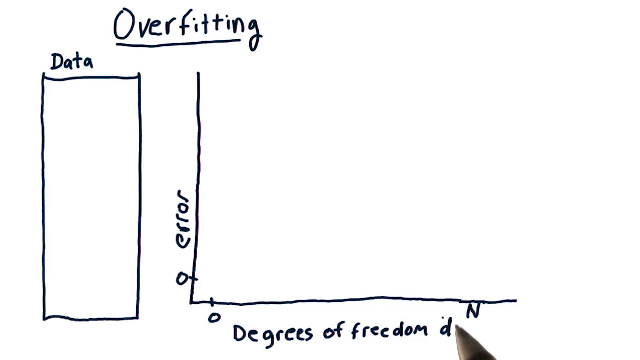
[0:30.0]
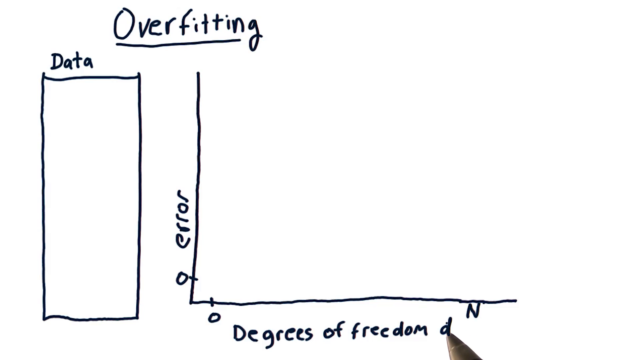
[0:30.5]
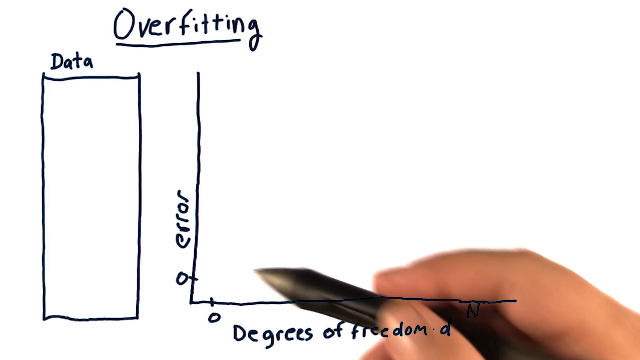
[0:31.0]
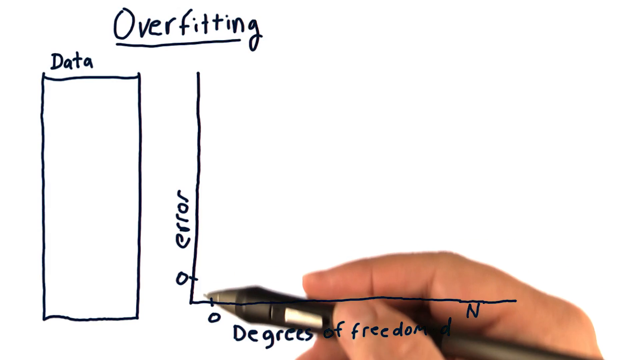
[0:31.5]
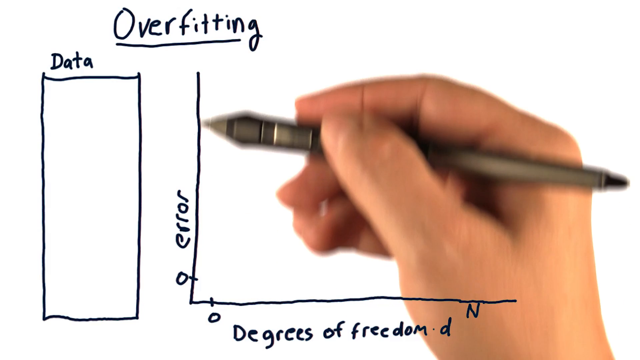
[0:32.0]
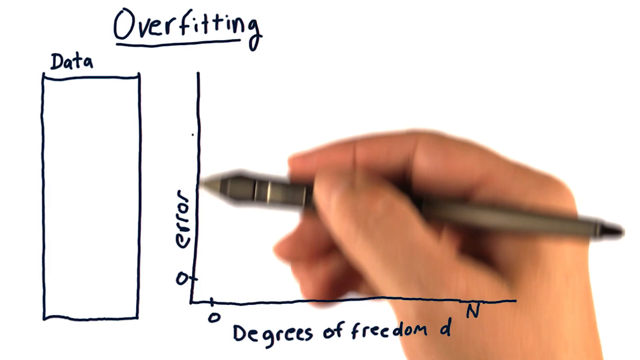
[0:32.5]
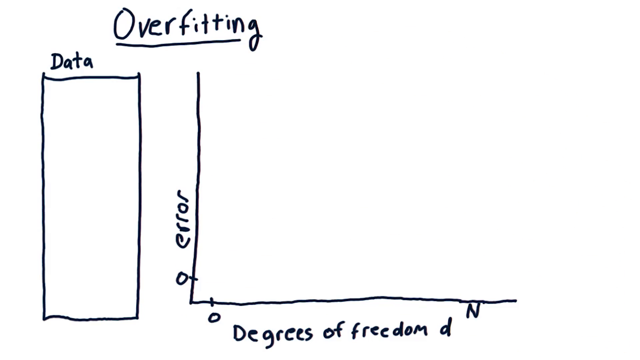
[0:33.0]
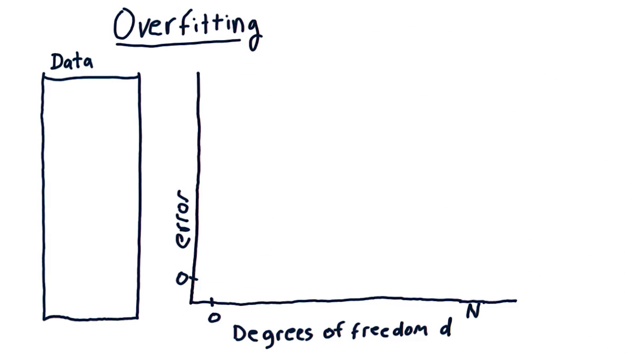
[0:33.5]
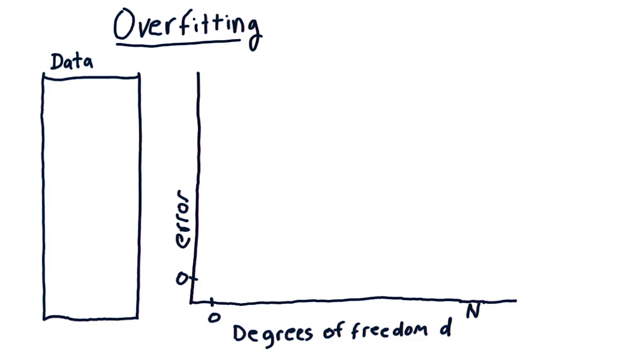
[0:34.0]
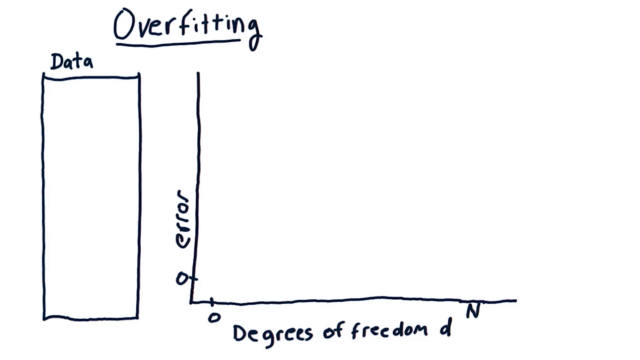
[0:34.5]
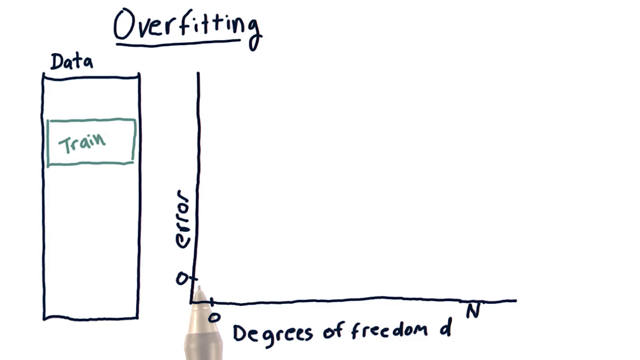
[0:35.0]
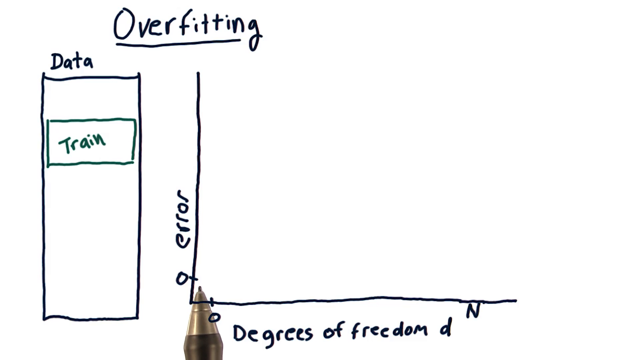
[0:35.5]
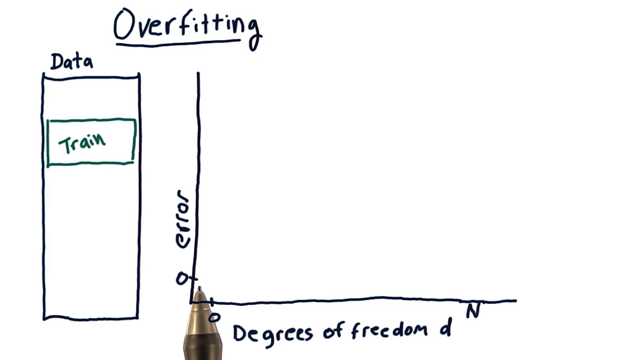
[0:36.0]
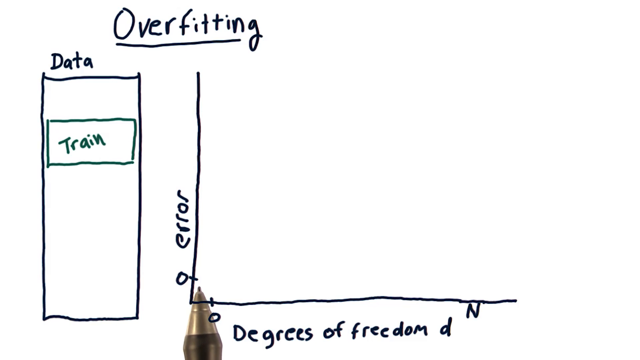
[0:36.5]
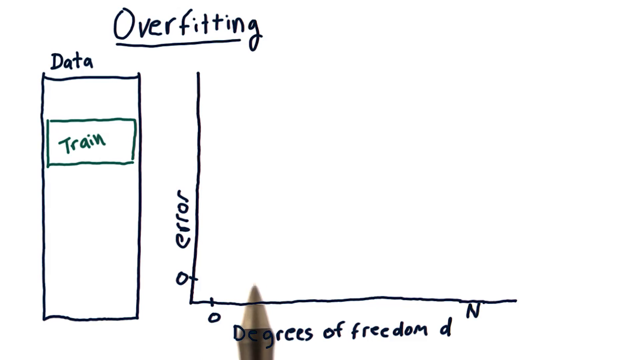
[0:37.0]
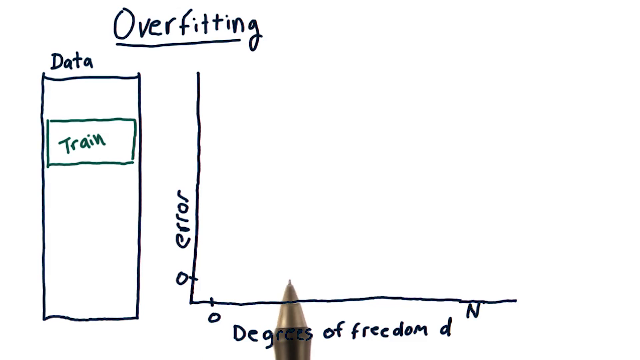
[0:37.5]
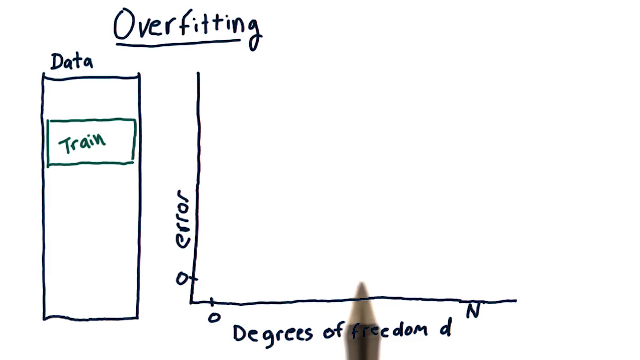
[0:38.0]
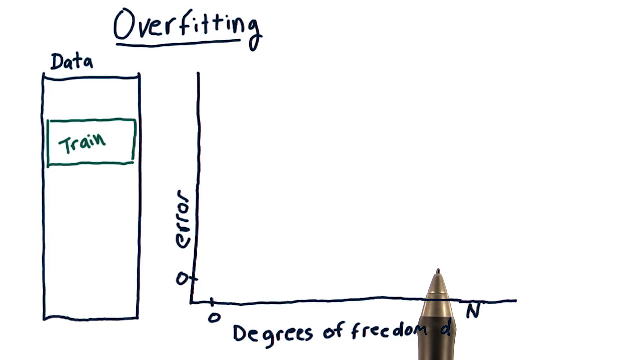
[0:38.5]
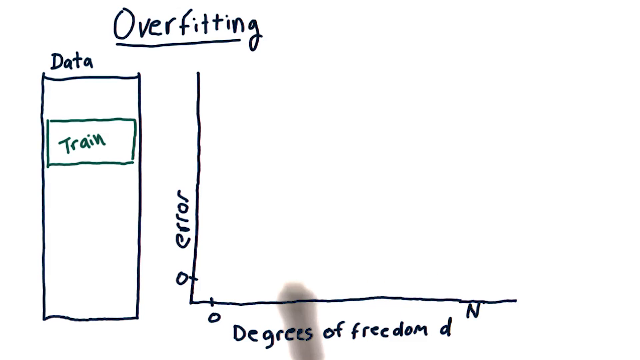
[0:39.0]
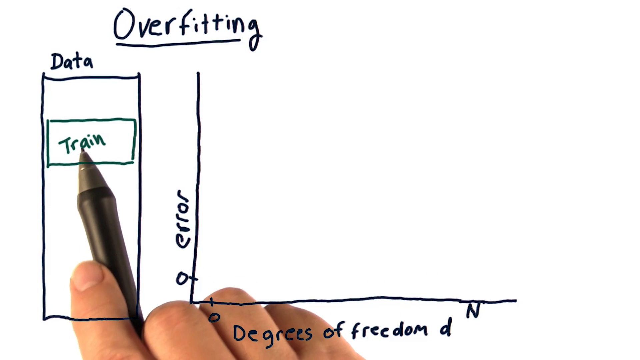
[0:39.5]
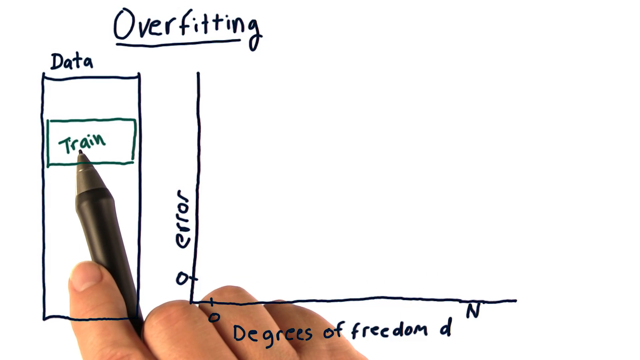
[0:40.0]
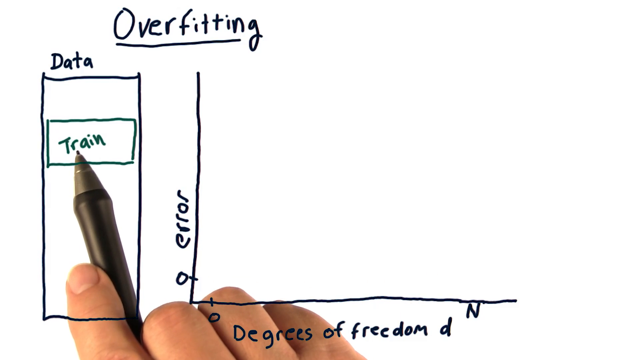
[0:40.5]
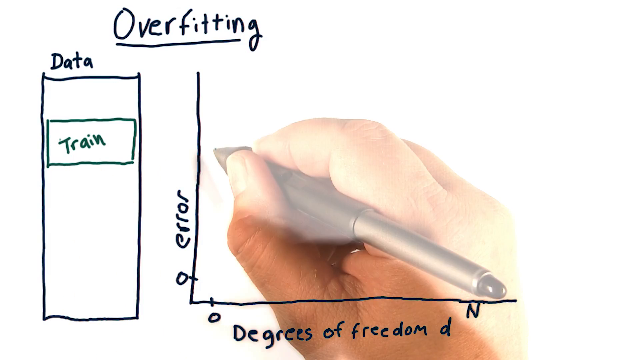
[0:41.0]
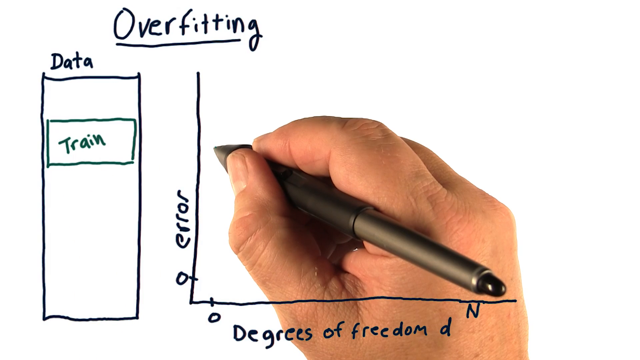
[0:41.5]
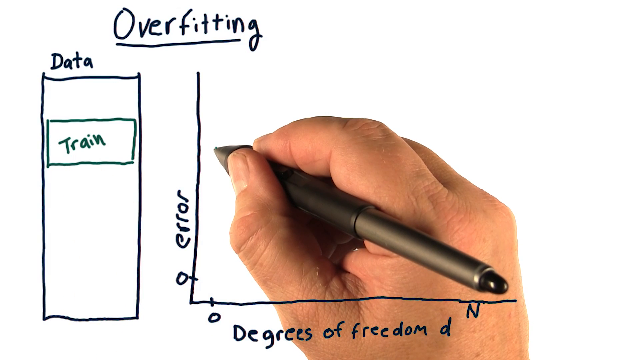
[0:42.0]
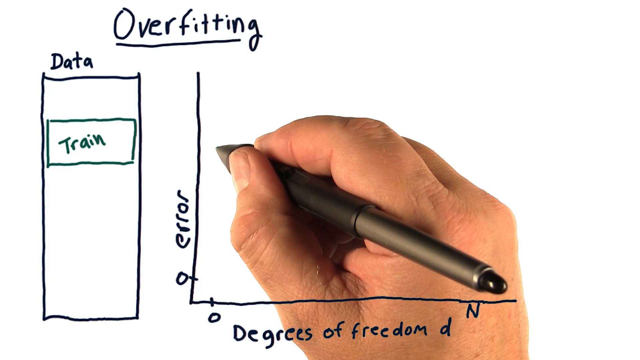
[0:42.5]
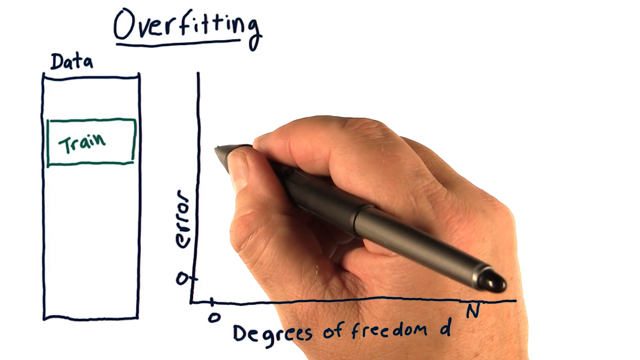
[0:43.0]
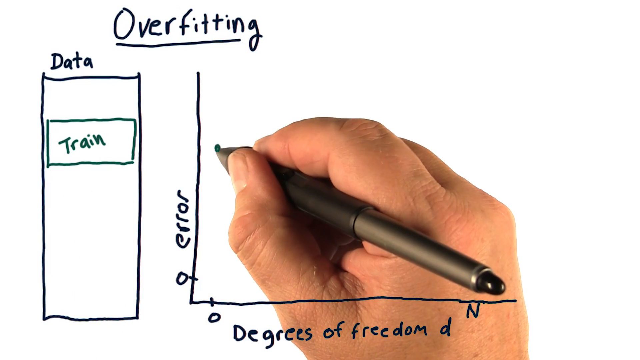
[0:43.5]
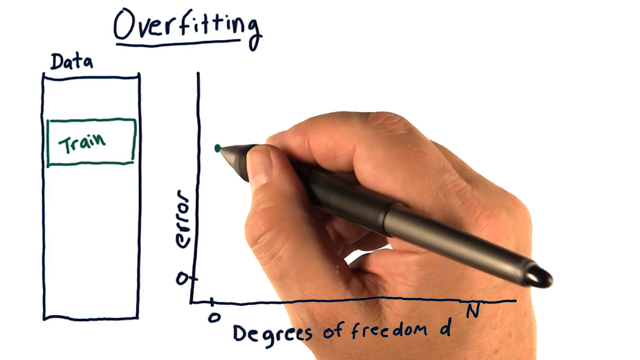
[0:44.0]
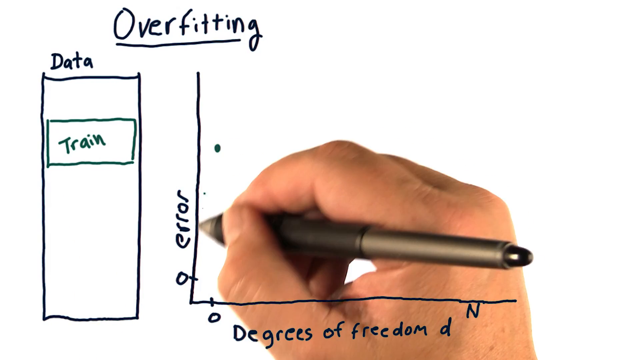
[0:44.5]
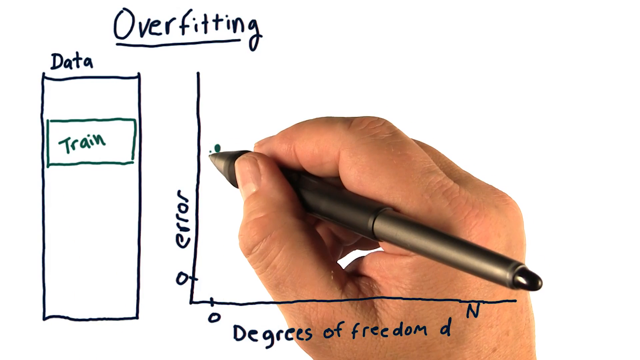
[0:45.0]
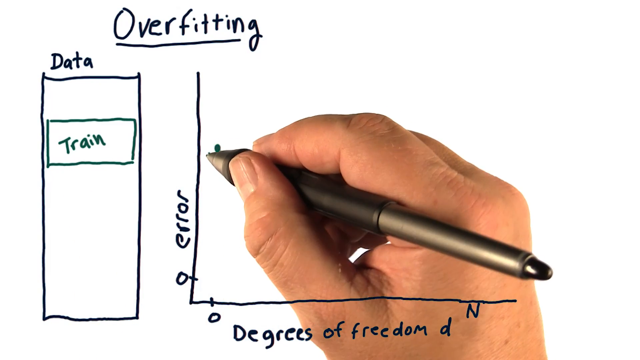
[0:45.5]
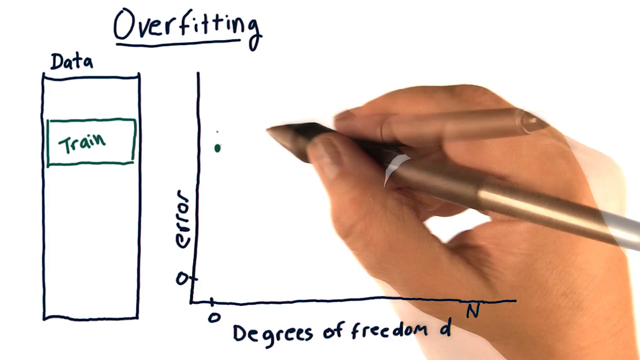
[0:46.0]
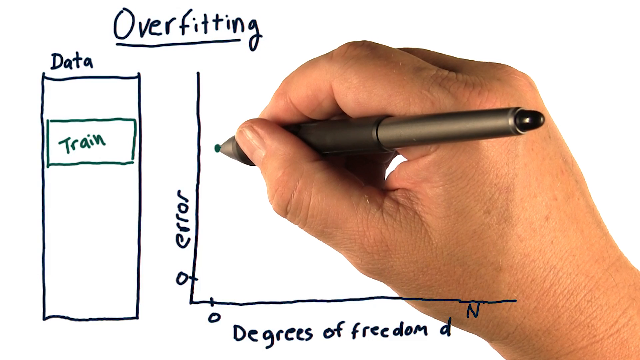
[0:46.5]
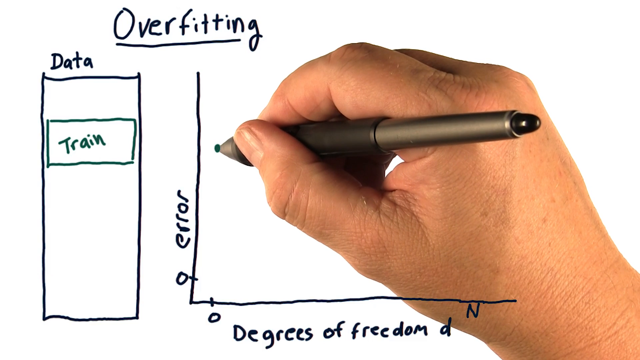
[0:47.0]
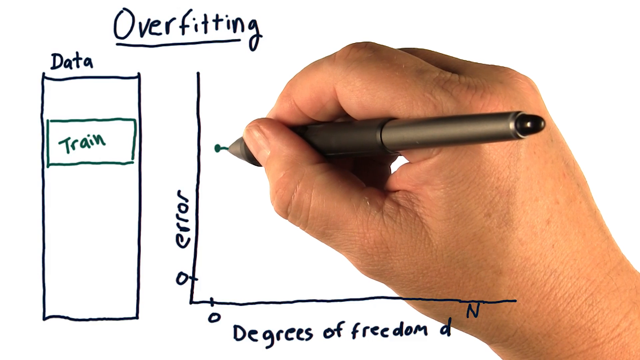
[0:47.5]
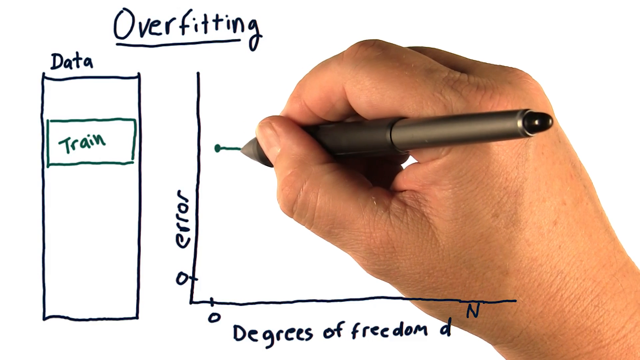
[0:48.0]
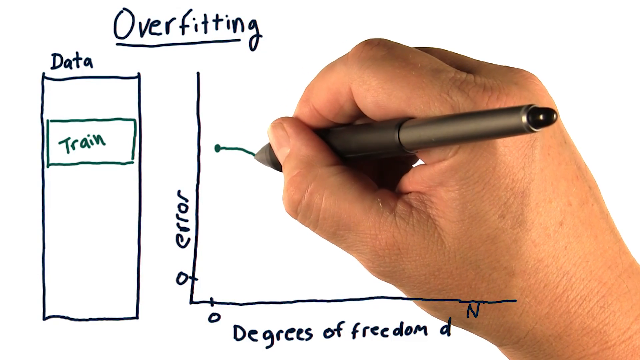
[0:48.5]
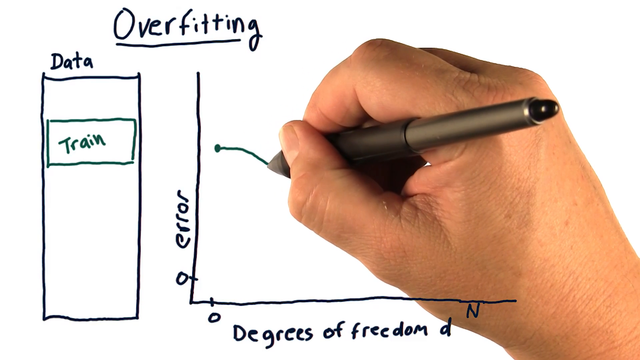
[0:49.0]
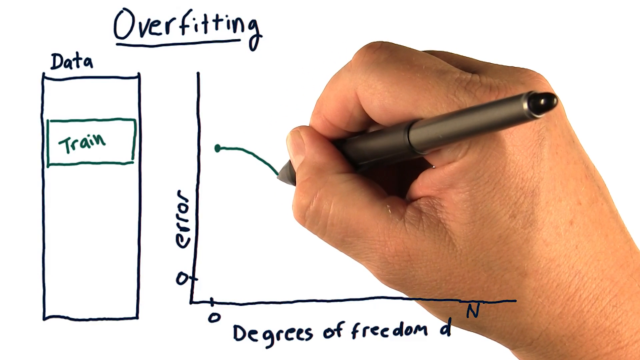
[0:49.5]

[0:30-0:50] There appears to be a hand-drawn graph on a white background, with the underlined title "overfitting" at the top. On the left is a vertical rectangle with "data" at its top. The graph on the right has a y-axis labeled "error" with 0 at the bottom and no maximum or other values. The x-axis starts at 0, apparently with an N on the right, and below it reads "degrees of freedom, D". At the start, a pen tip appears to be circling the letter D in "degrees of freedom, D". The pen and a right hand then appear from the bottom right, seemingly overlaid on the graph. The pen traces up and down the y-axis along the 0 and "error". Suddenly a green rectangle with the text "train" appears inside the data rectangle. The pen moves from what looks like the bottom left corner of the graph with waving motions toward the right, toward the N, then points toward the train rectangle. The pen then goes to the upper area of the y-axis at the 0 of the x-axis and draws a green line from that dot toward the right and then downward a little, forming a curved downward line.